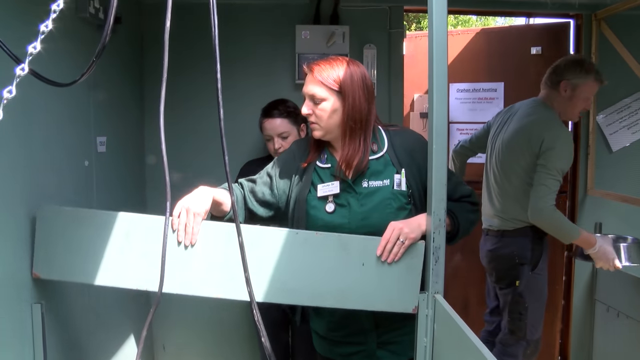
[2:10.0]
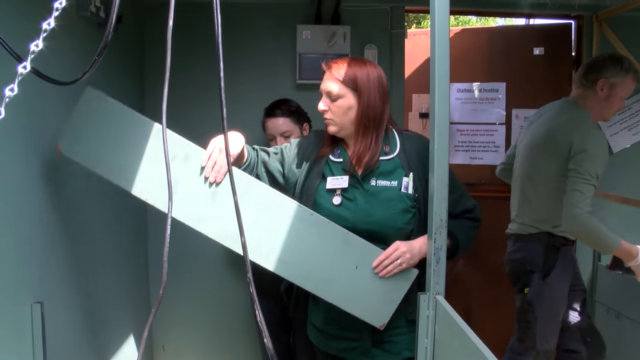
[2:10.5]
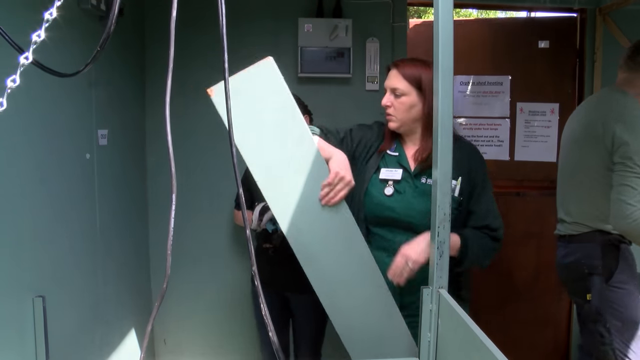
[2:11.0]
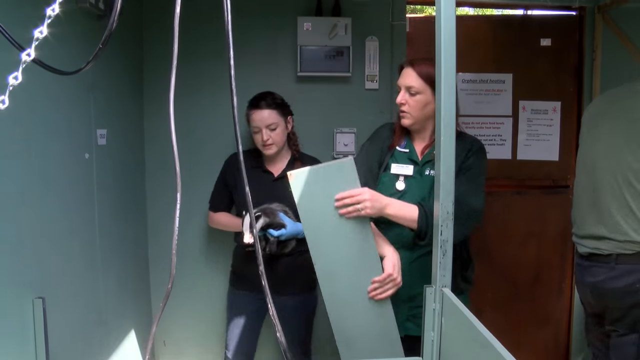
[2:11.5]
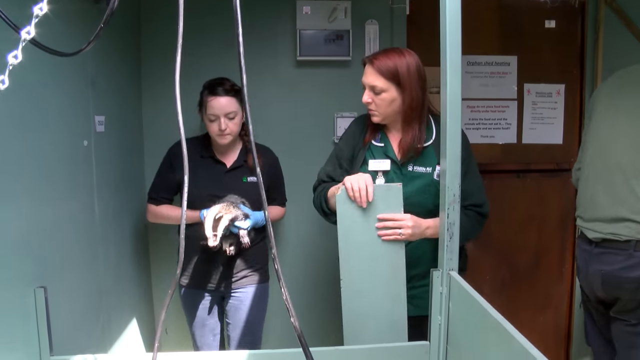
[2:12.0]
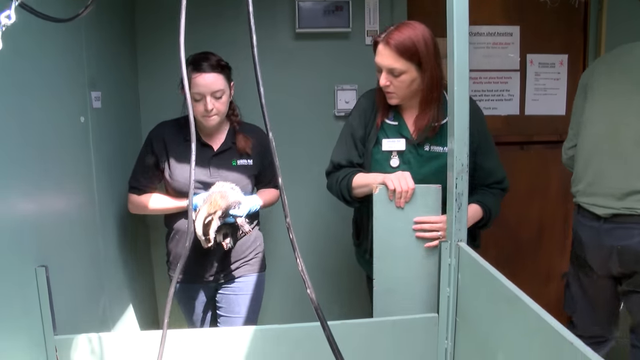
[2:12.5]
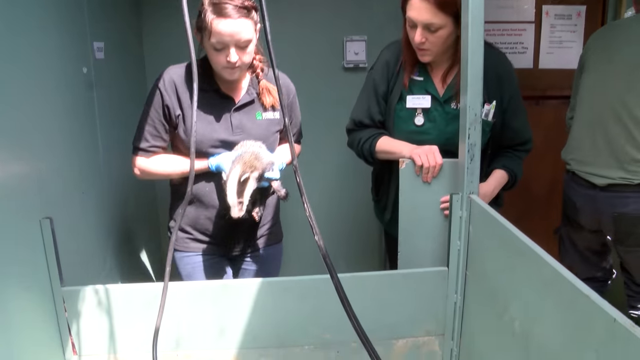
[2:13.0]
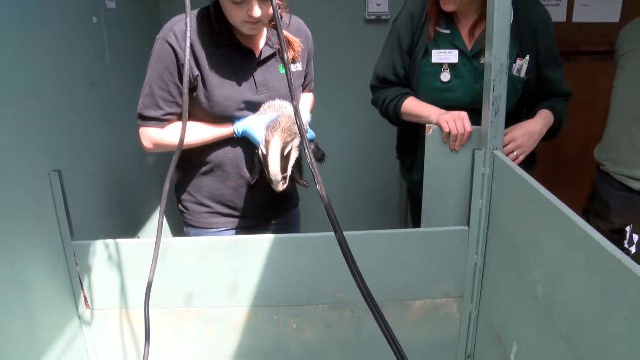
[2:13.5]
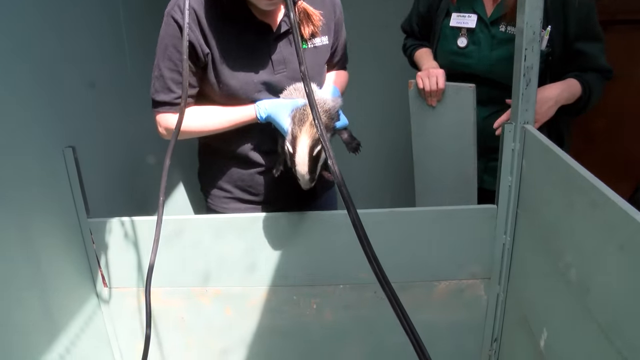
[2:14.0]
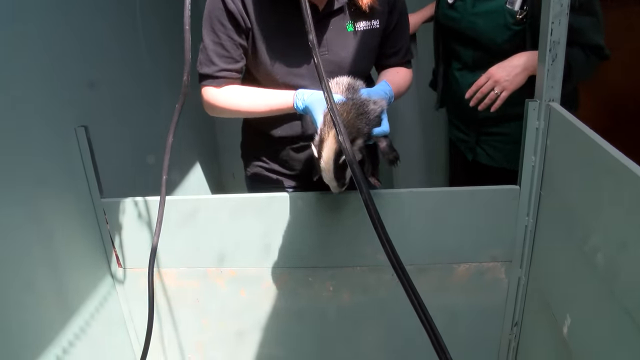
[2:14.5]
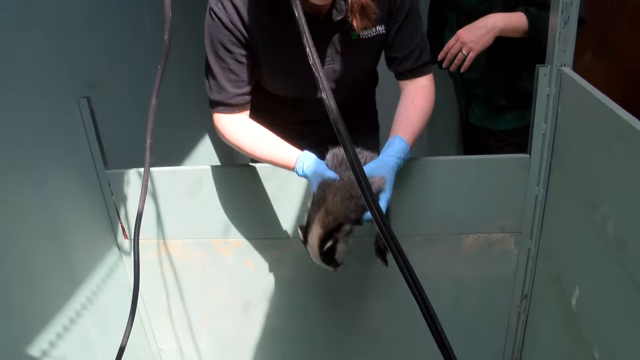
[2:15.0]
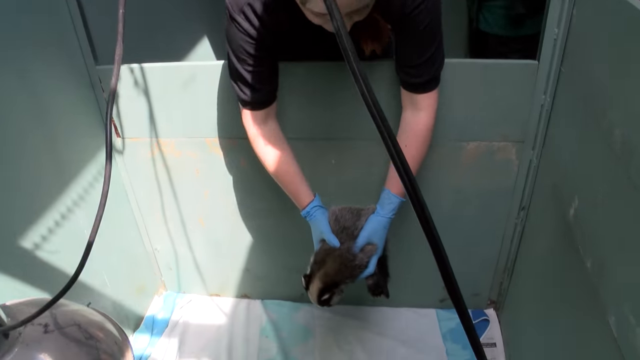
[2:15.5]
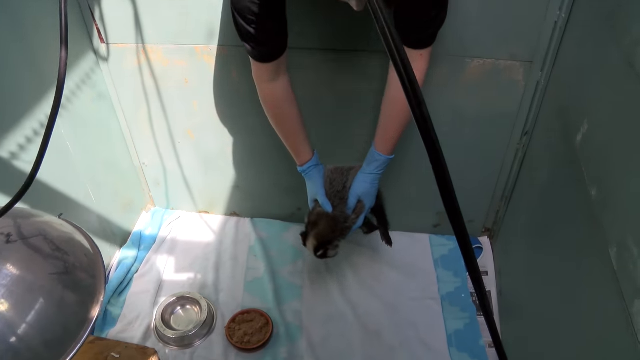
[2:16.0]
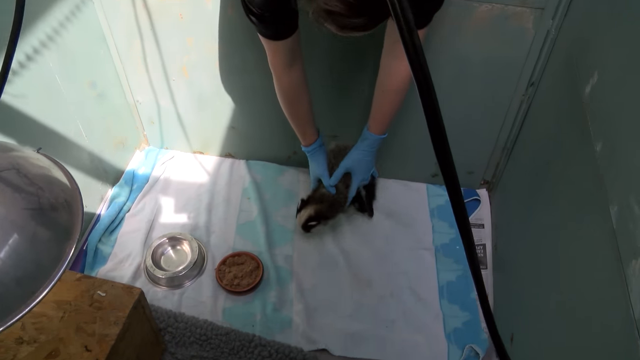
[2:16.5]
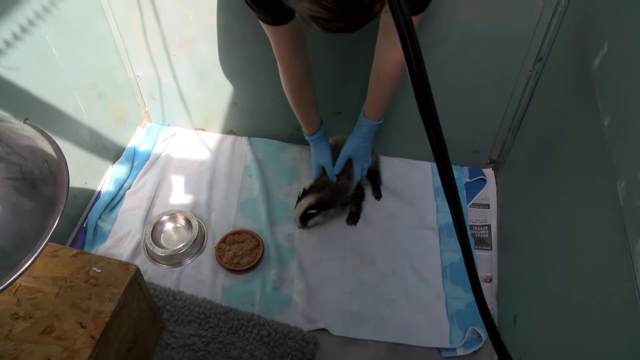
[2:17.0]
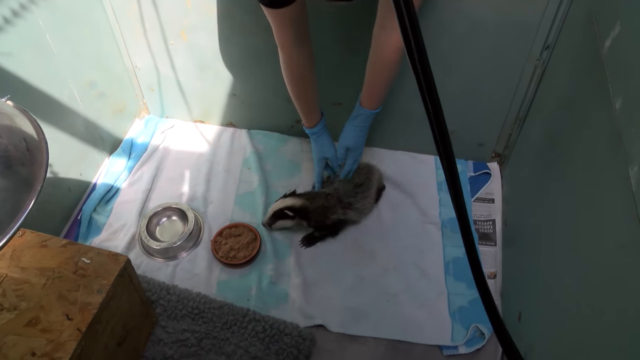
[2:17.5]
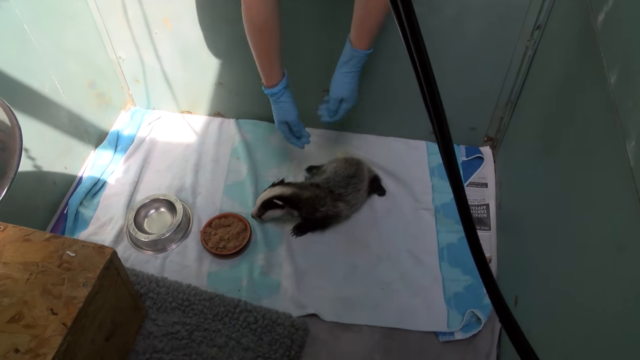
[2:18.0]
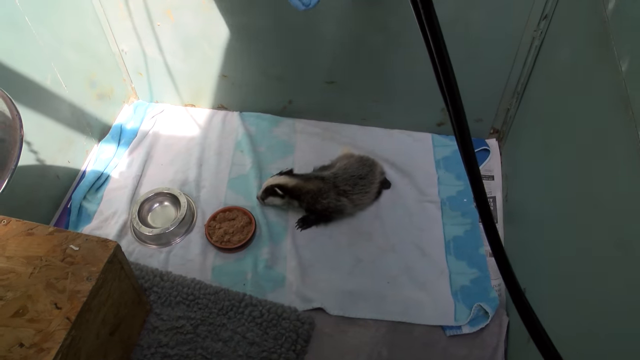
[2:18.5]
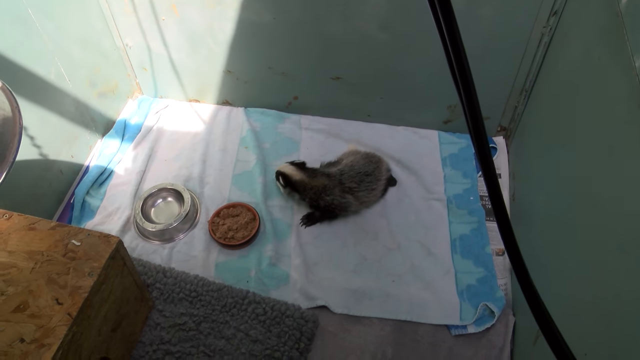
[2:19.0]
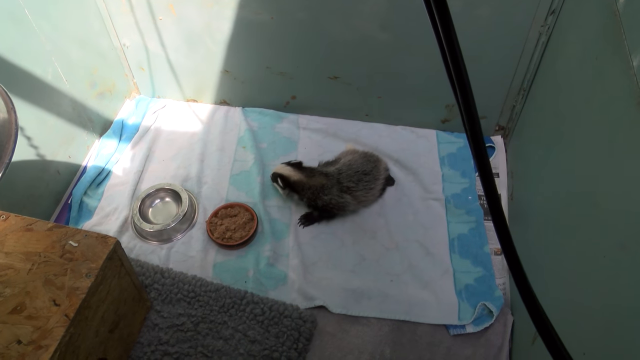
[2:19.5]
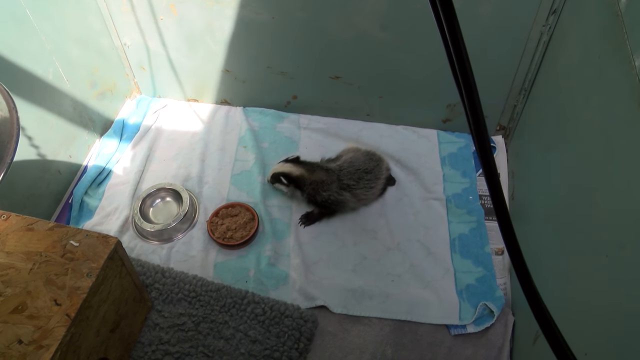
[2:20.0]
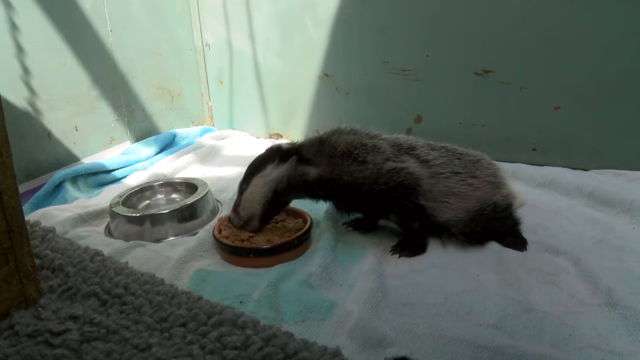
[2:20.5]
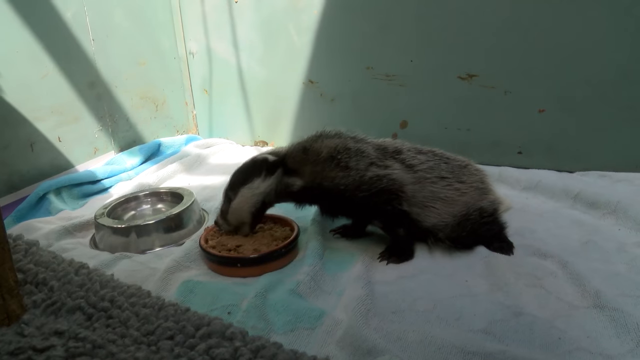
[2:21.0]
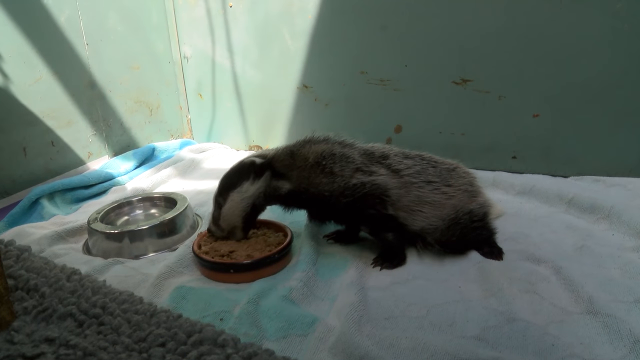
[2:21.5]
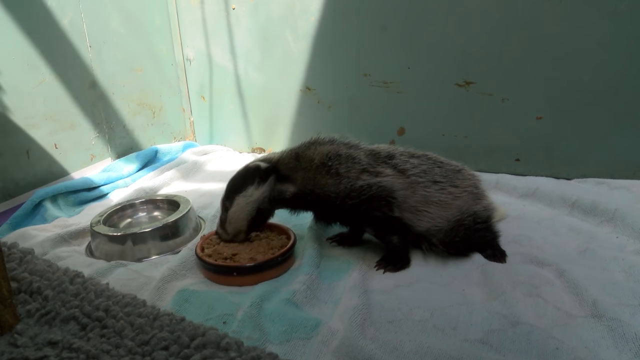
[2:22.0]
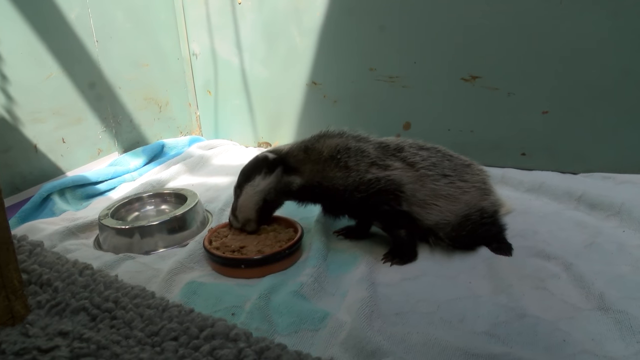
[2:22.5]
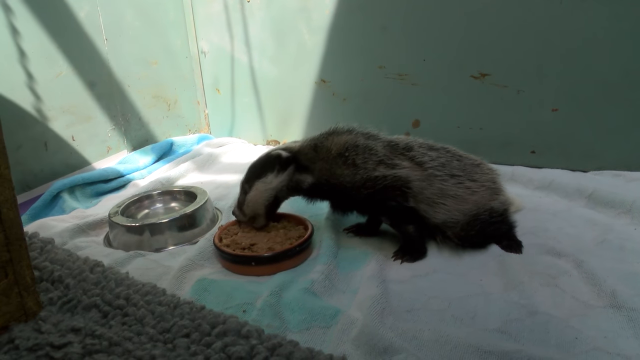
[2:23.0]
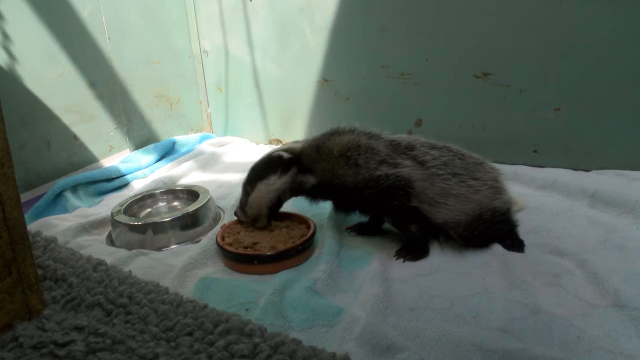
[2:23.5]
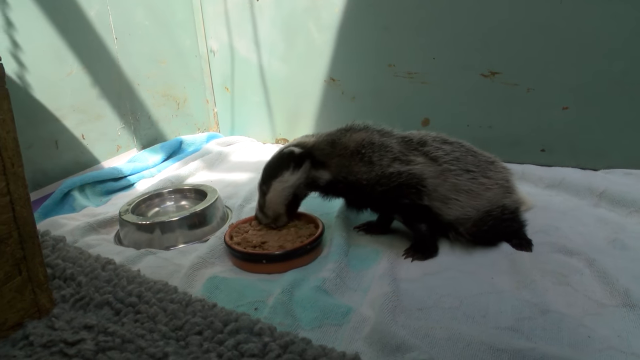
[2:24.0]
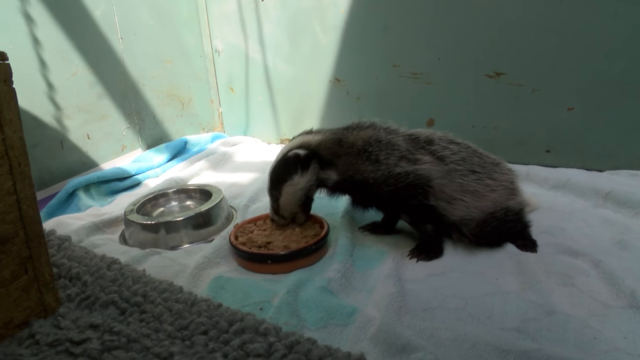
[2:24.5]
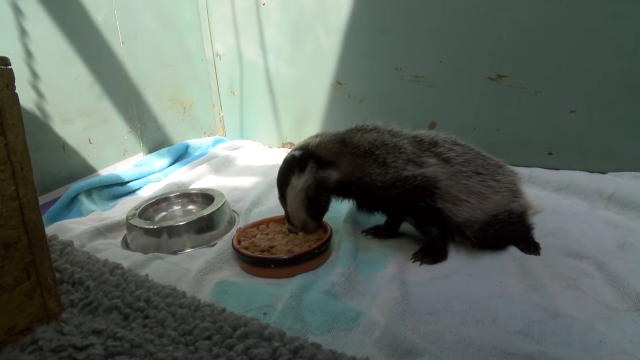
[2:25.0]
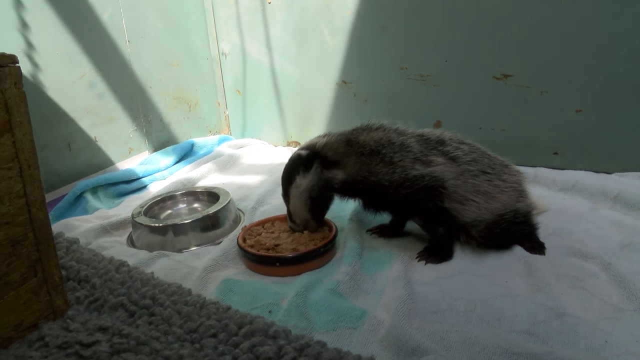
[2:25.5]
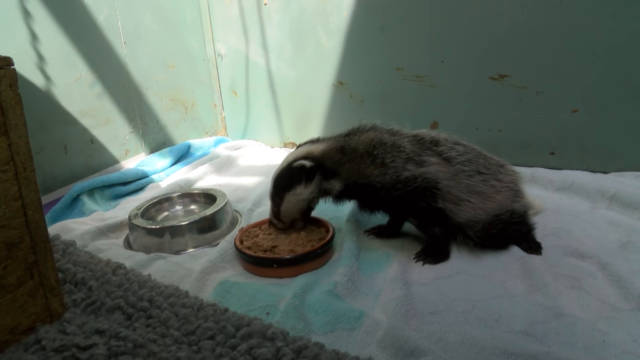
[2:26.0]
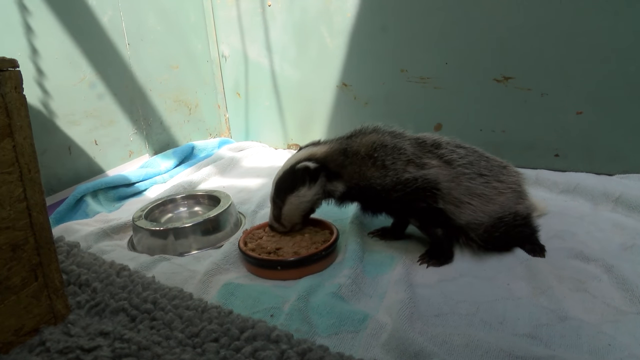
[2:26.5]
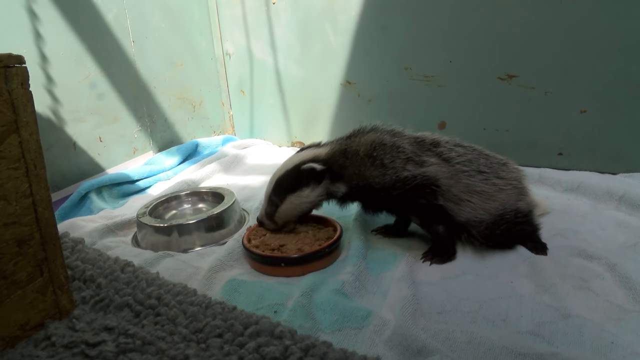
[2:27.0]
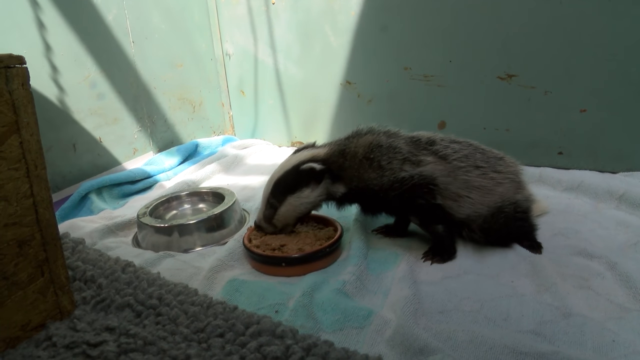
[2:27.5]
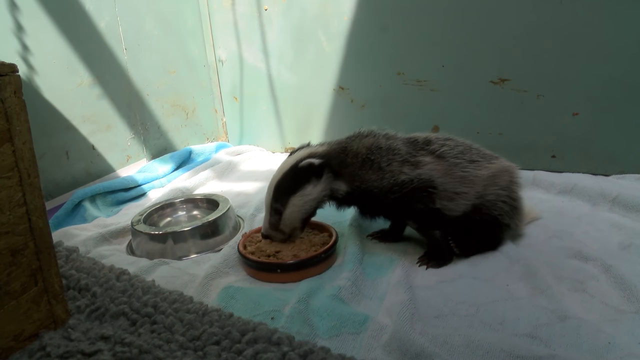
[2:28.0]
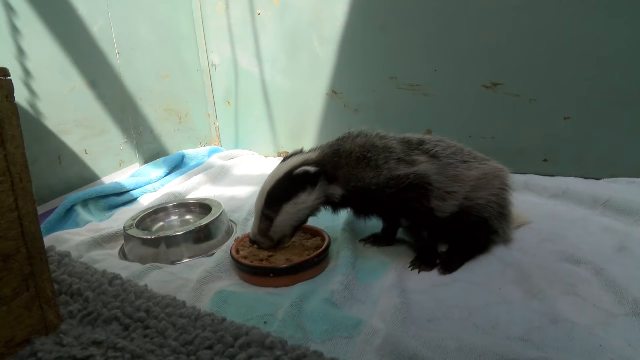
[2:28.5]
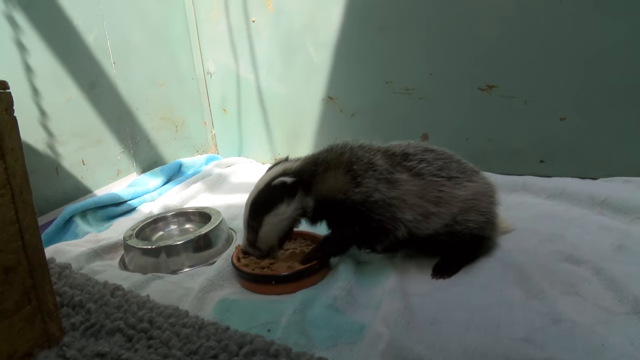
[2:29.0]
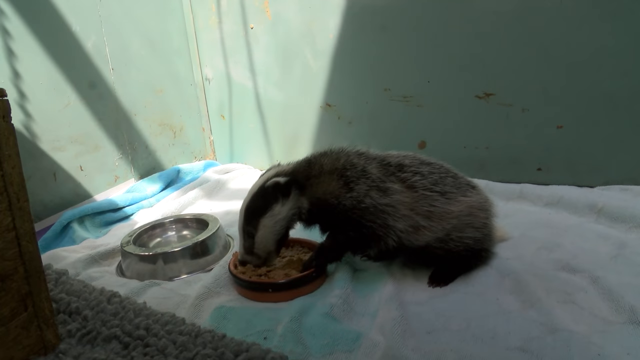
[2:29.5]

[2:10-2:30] In the green room, a man walks through a red door with a silver dog bowl. The women put the badger on a towel in a closed-off space, his own enclosure. He has more food and goes in on it, looking very hungry and energetic. The red bandage is no longer visible. Next to his bowl is a silver bowl with water.